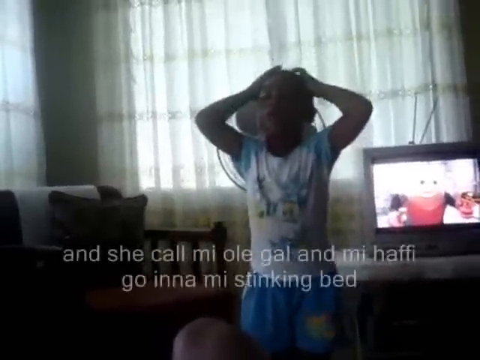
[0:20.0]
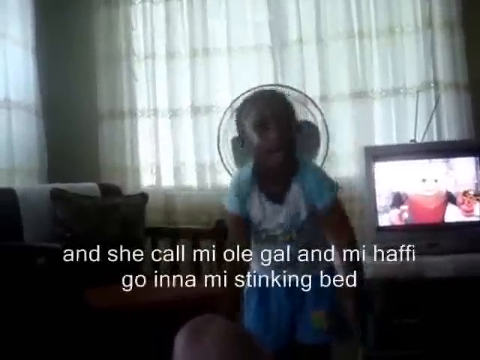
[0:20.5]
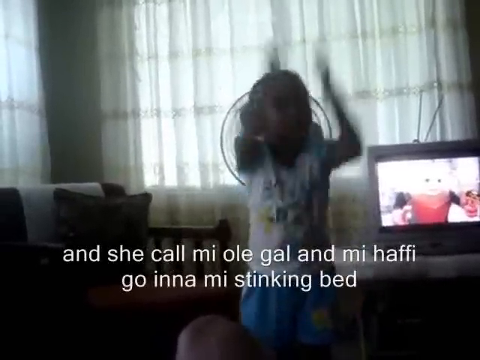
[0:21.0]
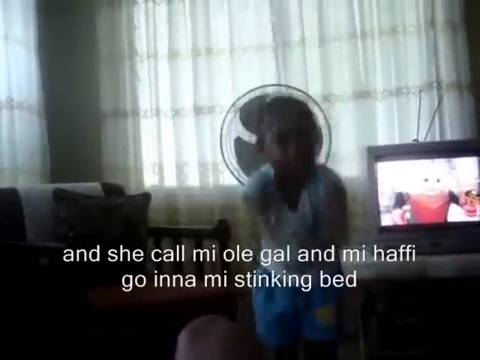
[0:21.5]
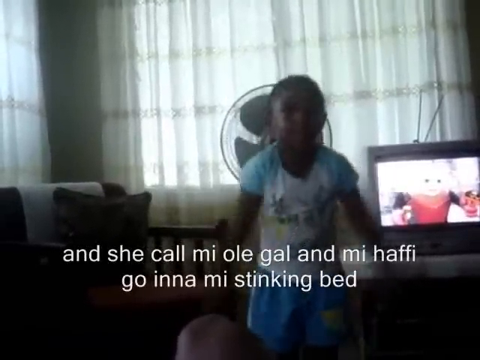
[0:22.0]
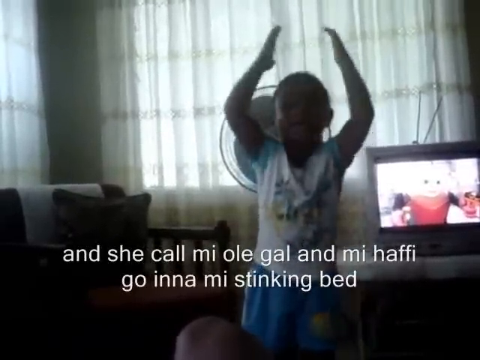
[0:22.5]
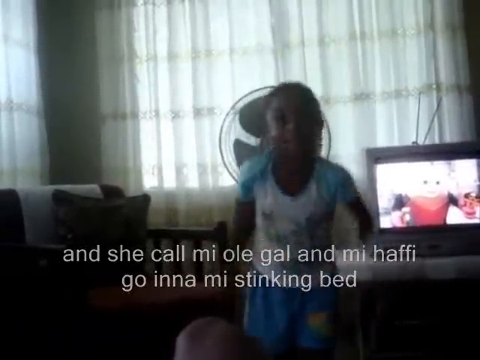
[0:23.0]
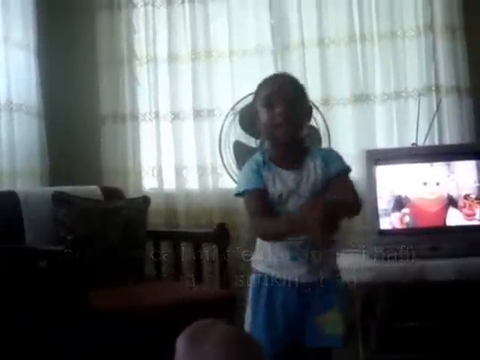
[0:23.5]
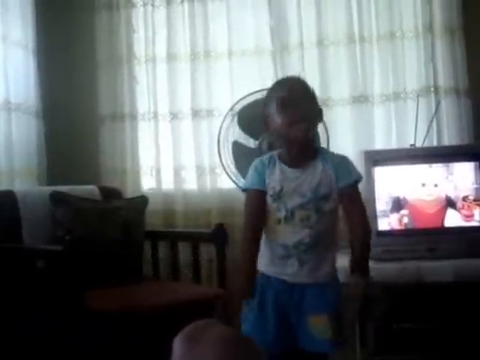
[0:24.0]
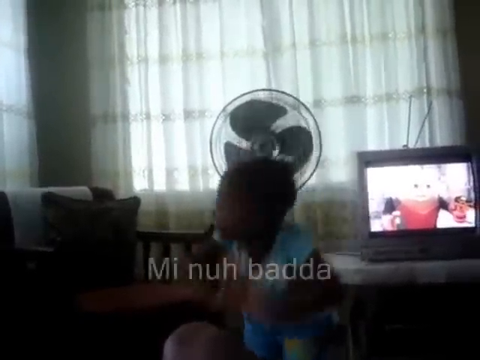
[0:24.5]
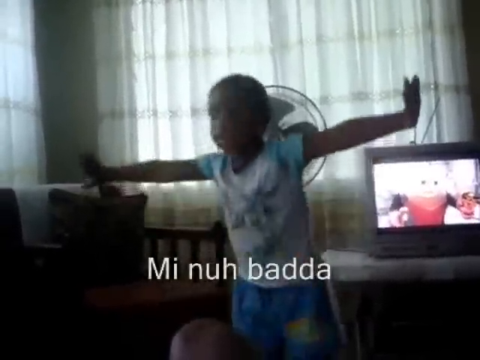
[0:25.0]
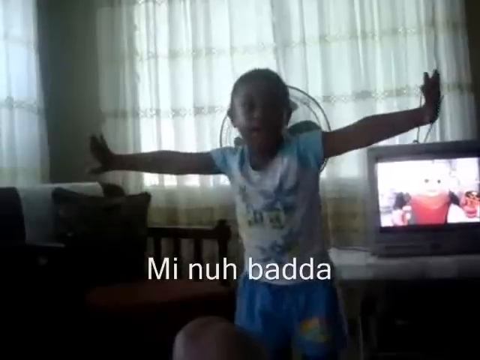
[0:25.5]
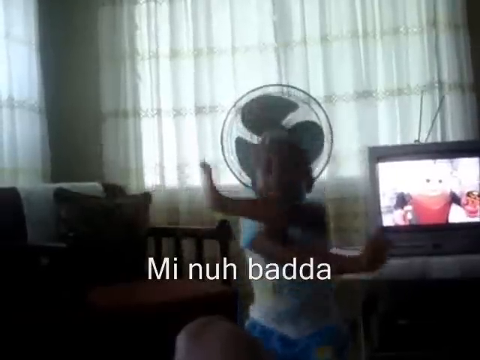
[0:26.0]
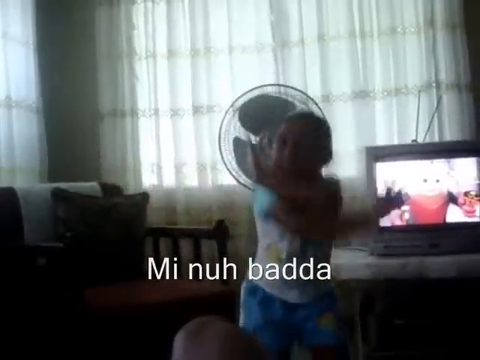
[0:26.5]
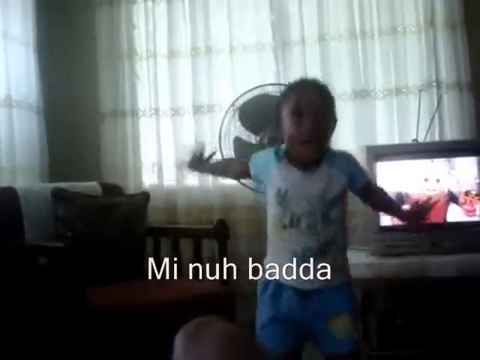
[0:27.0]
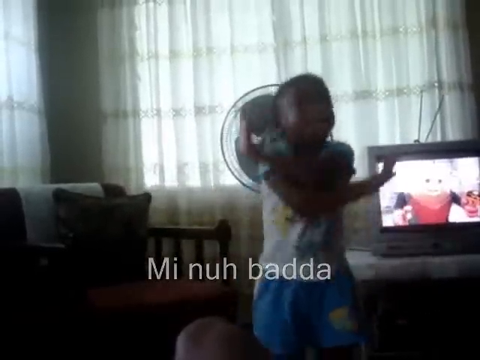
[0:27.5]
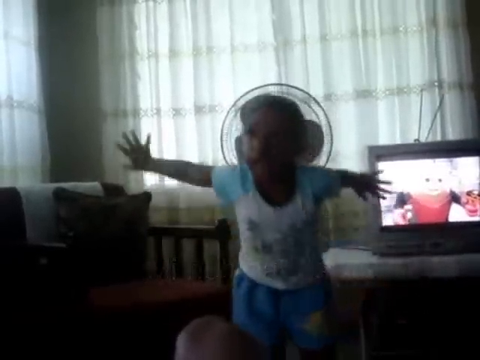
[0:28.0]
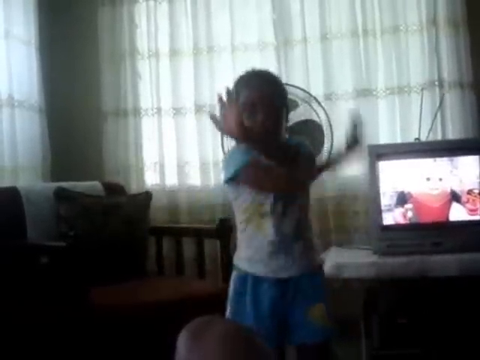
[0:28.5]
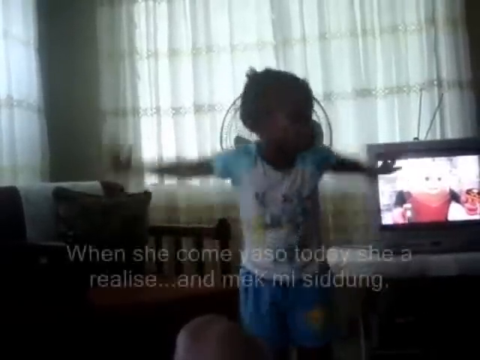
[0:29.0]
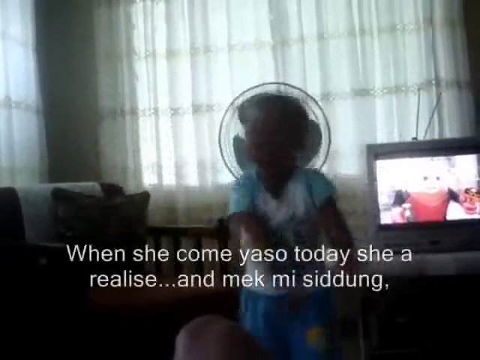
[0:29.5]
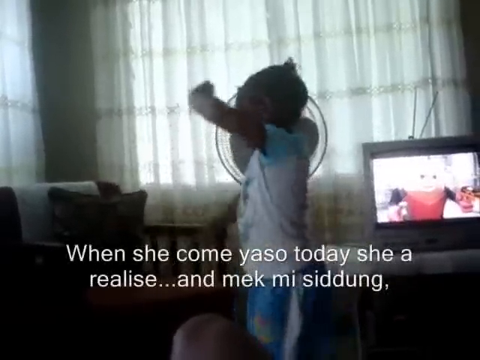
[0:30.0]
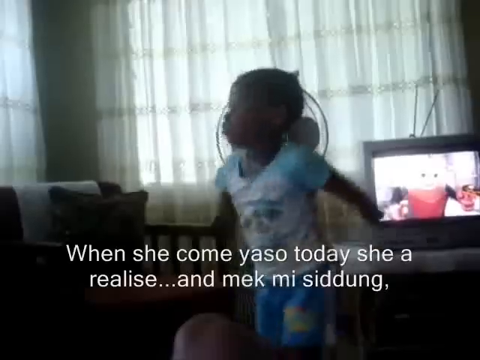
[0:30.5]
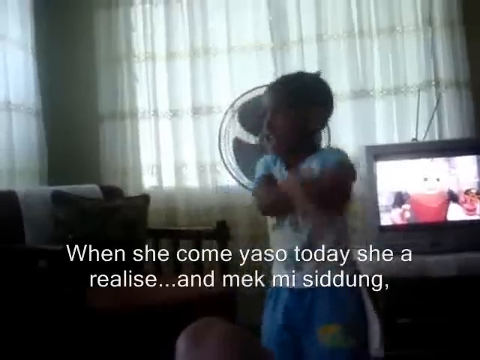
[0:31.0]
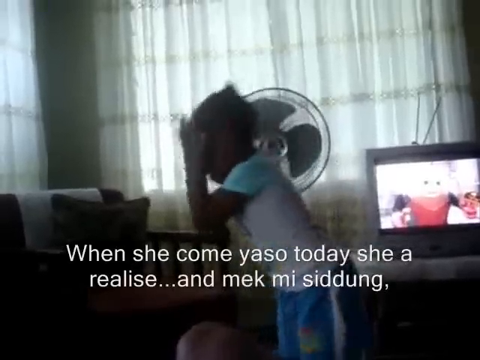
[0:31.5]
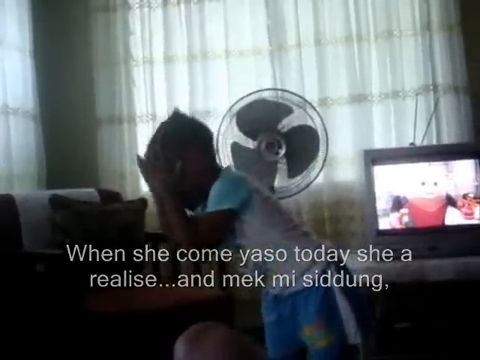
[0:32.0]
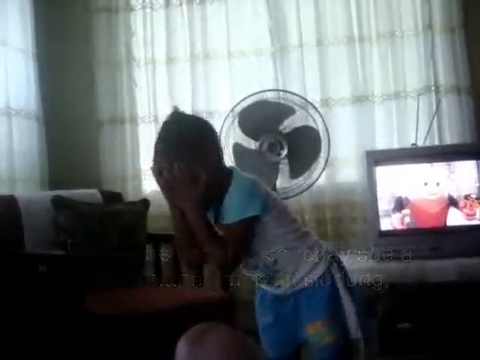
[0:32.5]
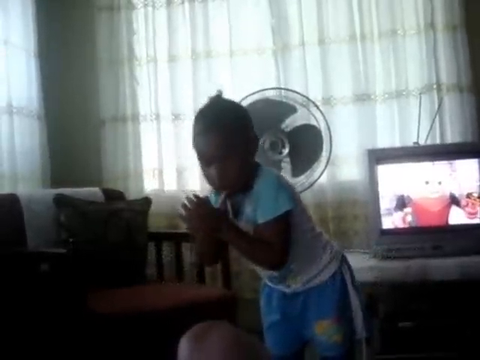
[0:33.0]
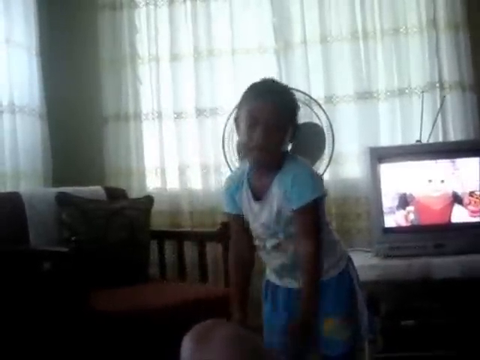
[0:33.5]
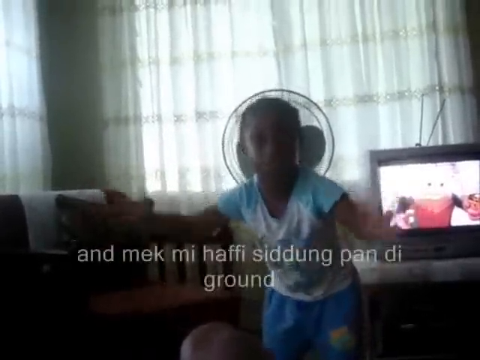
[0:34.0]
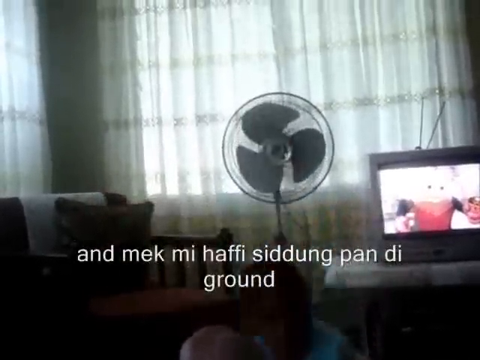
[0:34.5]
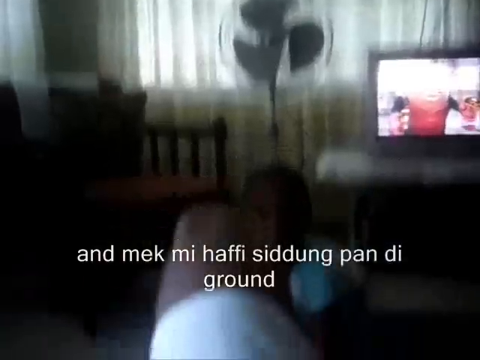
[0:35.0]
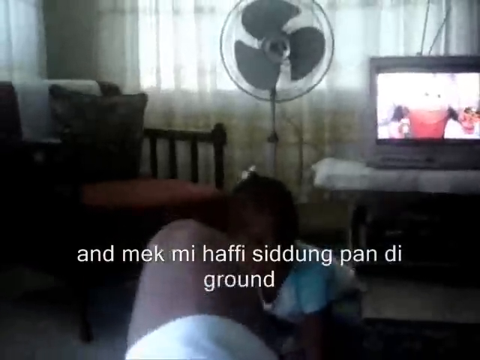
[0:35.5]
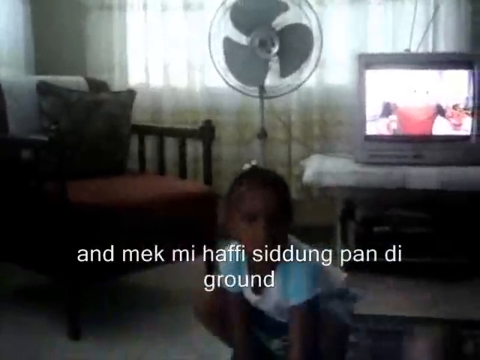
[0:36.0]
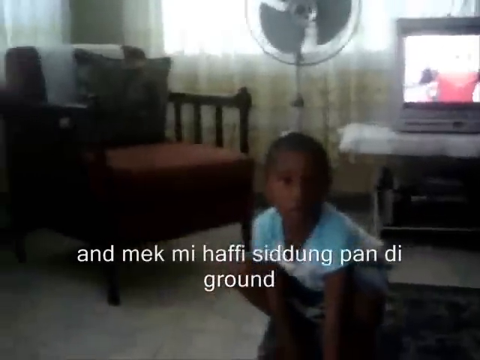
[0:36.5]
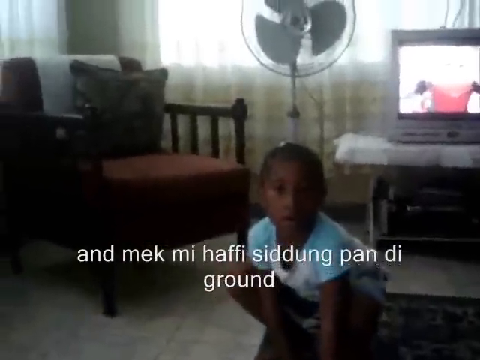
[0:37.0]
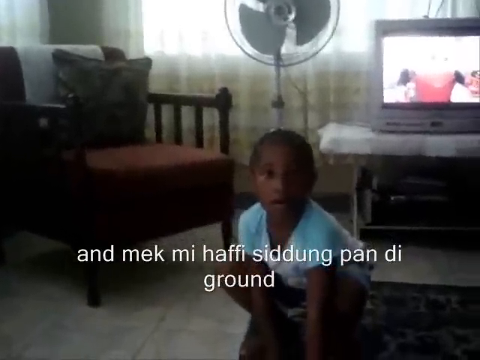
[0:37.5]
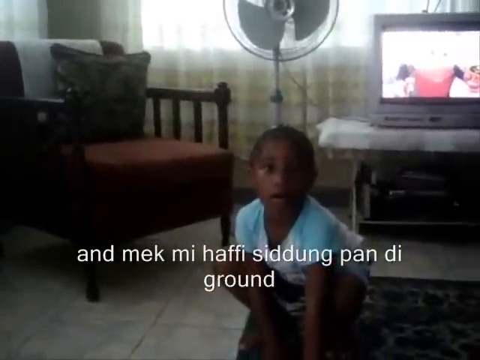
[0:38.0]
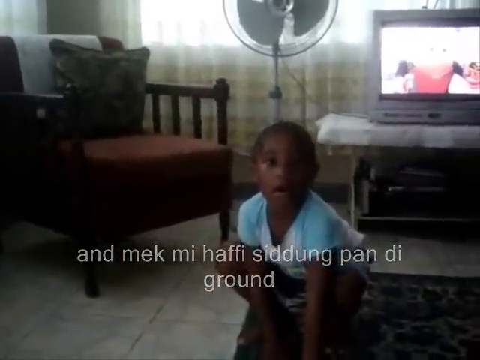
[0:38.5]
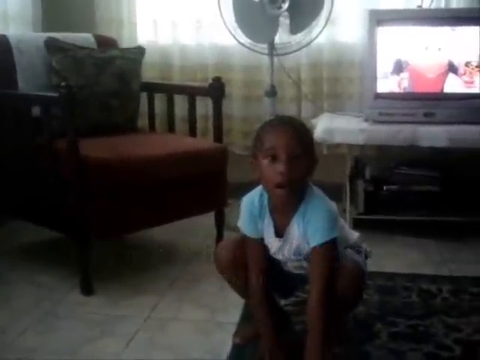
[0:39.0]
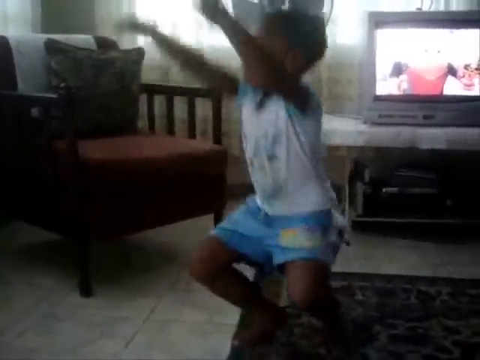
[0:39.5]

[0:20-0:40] In the same interior room, the little girl runs around the room, apparently speaking quite loudly, moving her hands and then extending them fully as she speaks. Subtitles at the bottom of the video are partially in a different language. While speaking, she crosses her arms in front of her and then back, repeatedly. She then puts her hands to her face and runs them down her face as she speaks and moves her body. She crouches fully down, still on her feet, and a male's leg becomes visible. In the back left corner of the room is a chair with a decorative pillow on top of it.